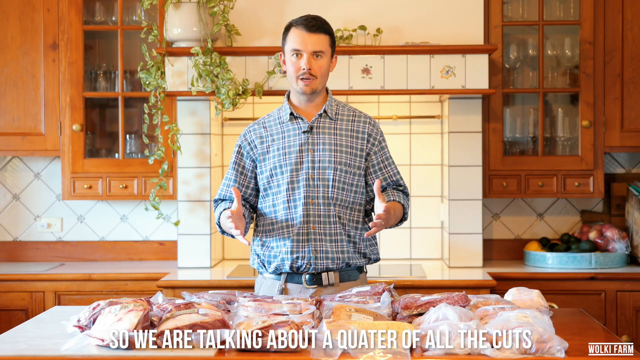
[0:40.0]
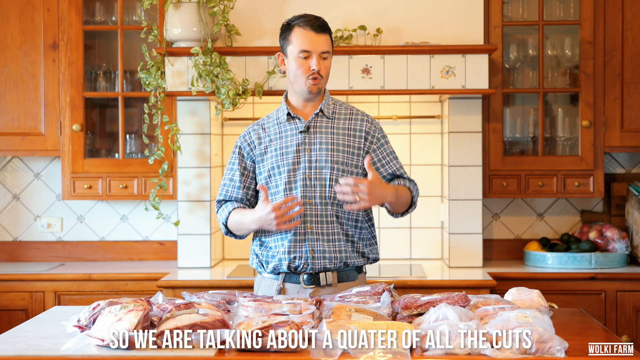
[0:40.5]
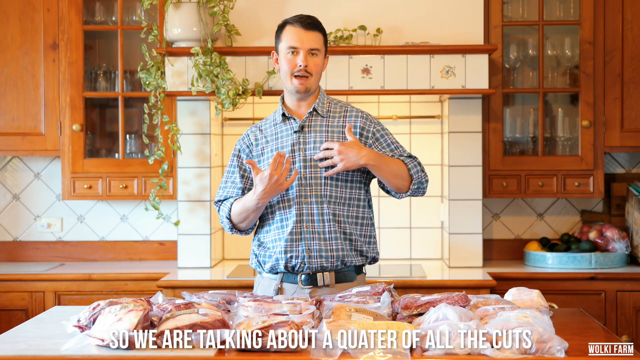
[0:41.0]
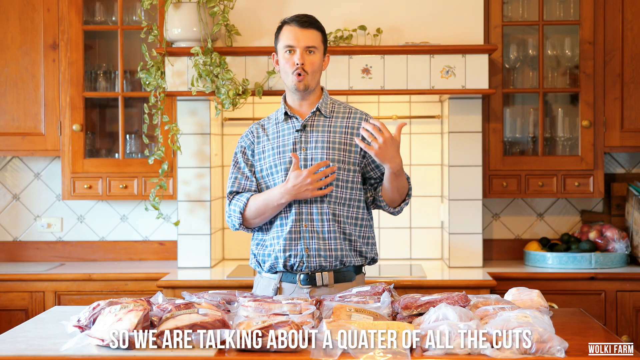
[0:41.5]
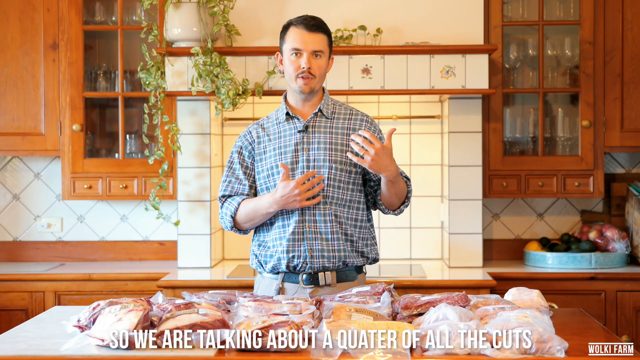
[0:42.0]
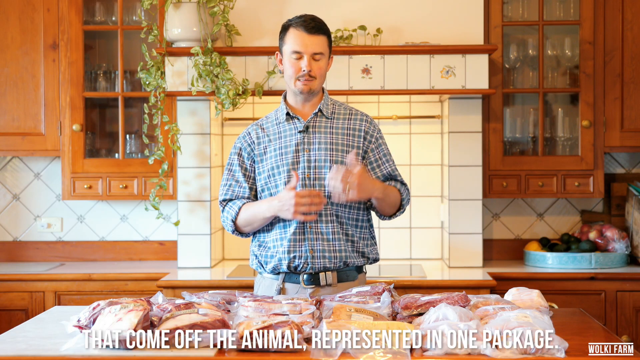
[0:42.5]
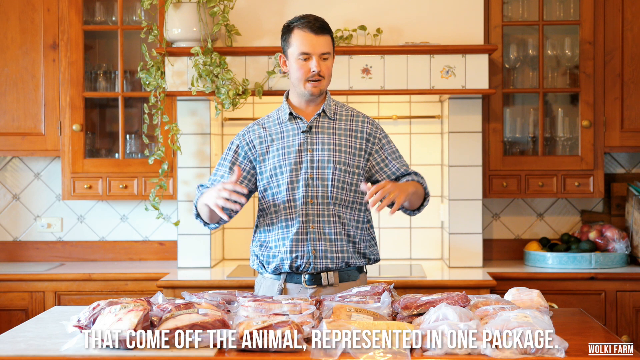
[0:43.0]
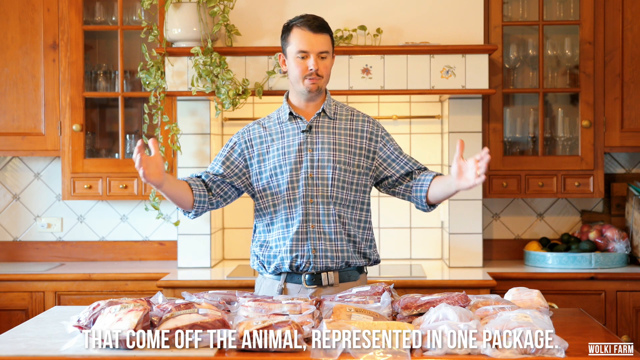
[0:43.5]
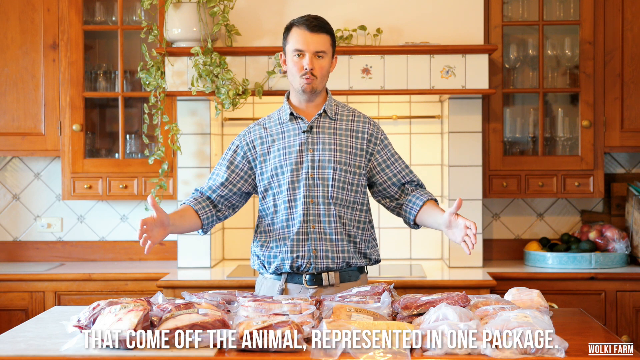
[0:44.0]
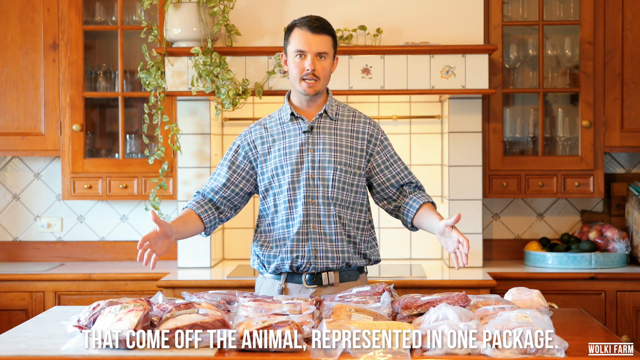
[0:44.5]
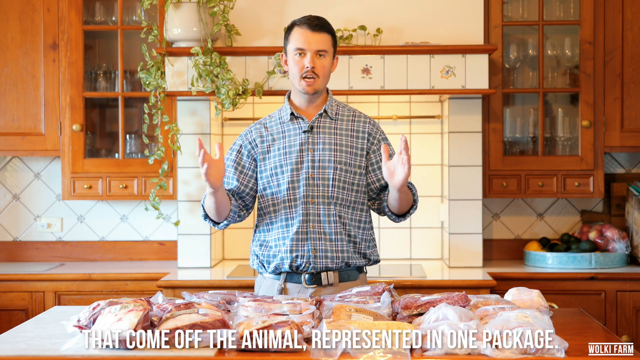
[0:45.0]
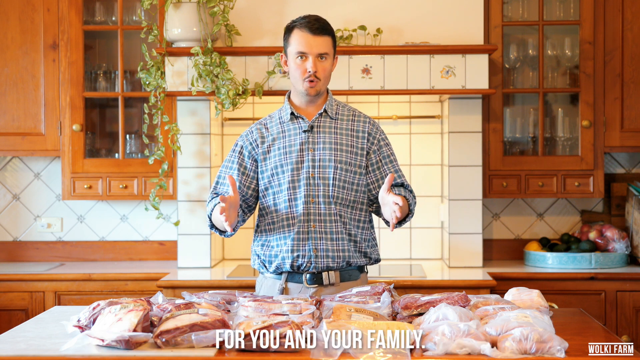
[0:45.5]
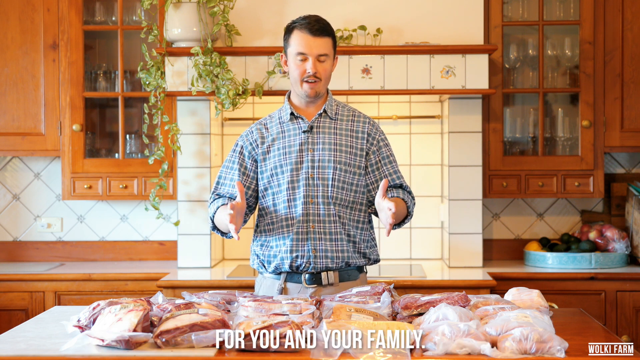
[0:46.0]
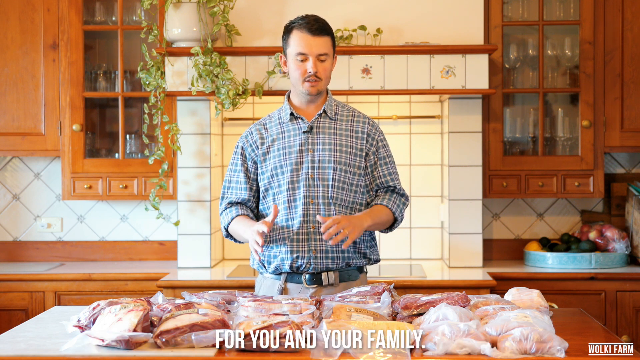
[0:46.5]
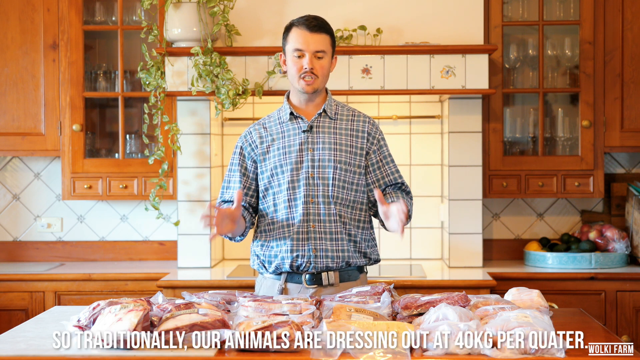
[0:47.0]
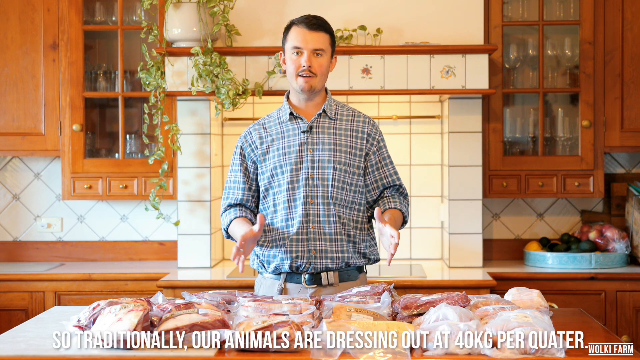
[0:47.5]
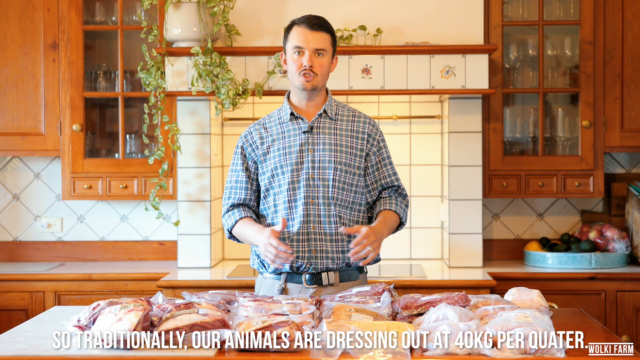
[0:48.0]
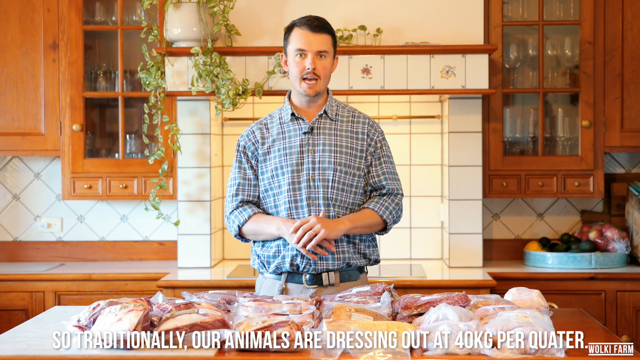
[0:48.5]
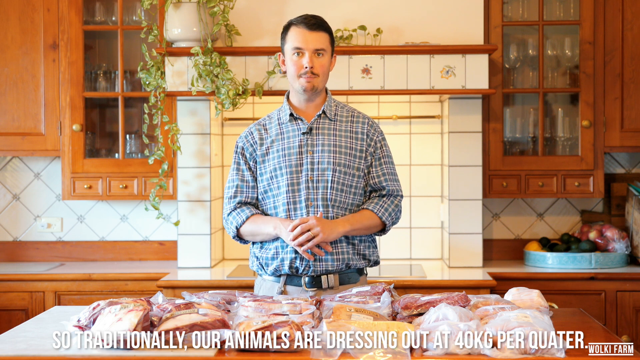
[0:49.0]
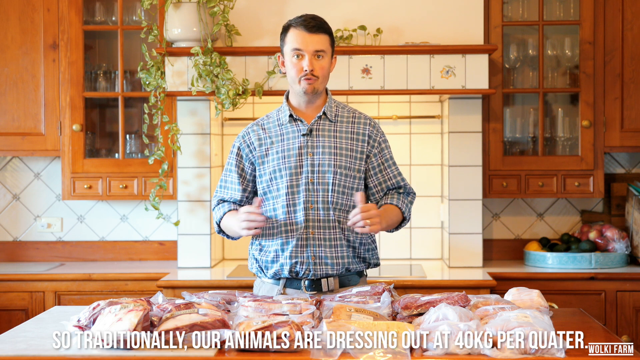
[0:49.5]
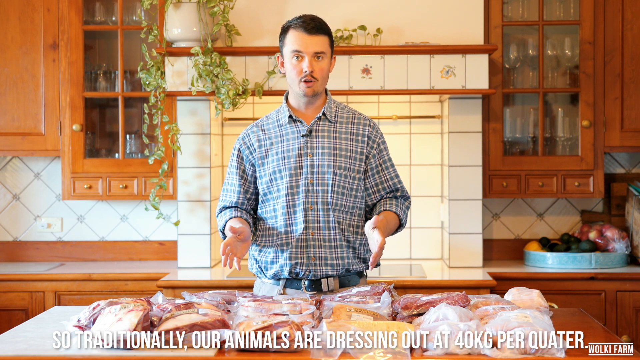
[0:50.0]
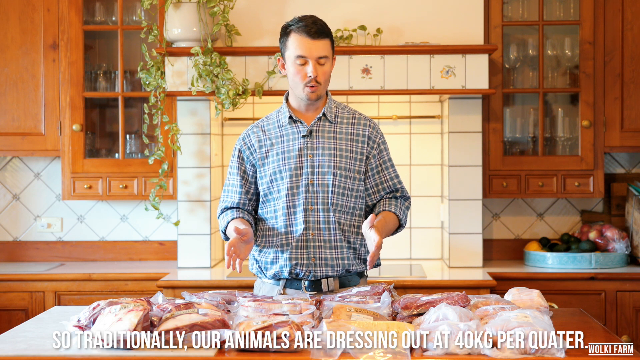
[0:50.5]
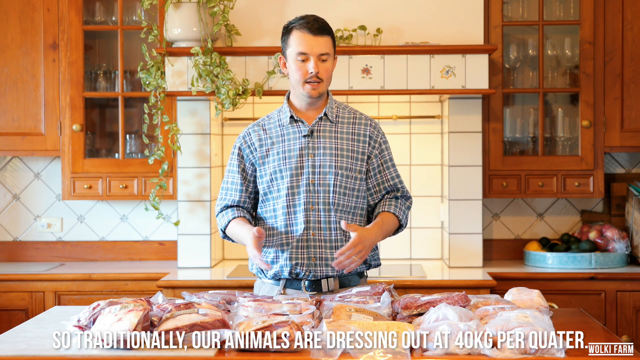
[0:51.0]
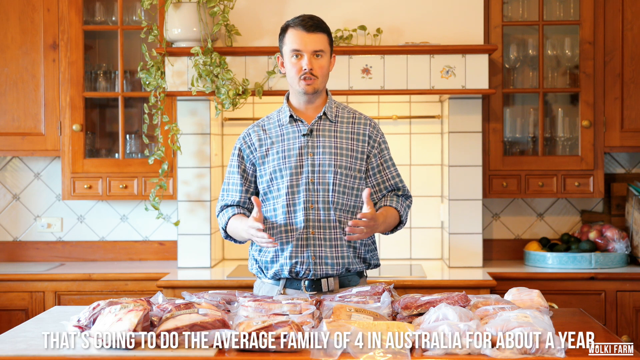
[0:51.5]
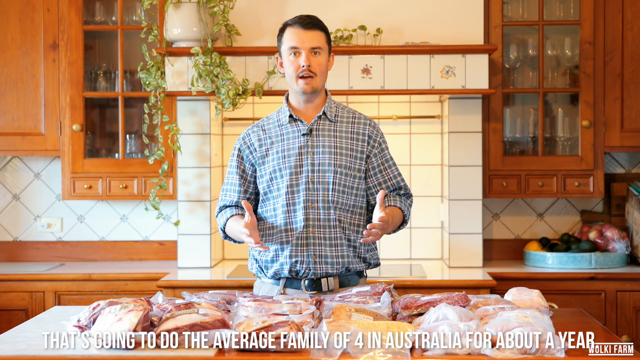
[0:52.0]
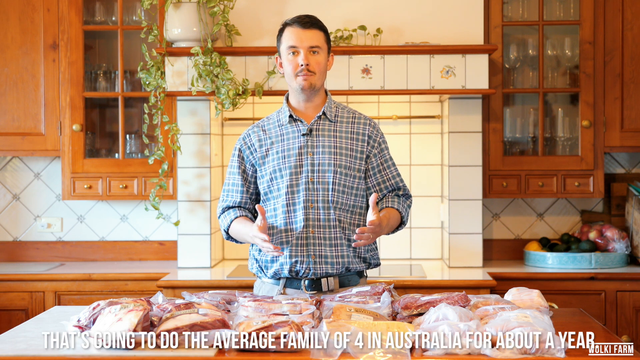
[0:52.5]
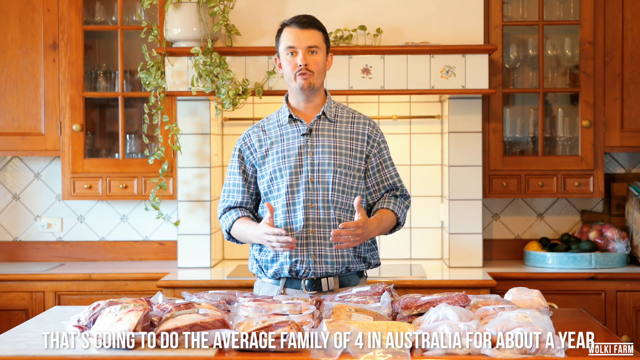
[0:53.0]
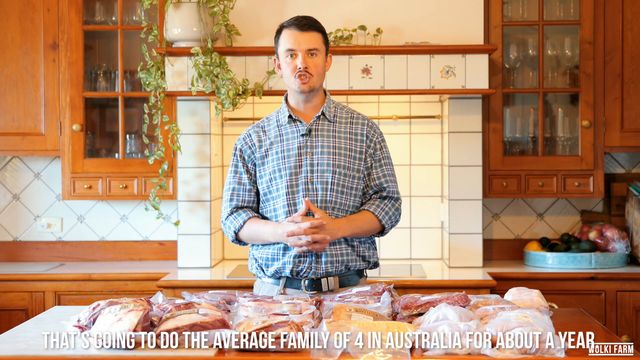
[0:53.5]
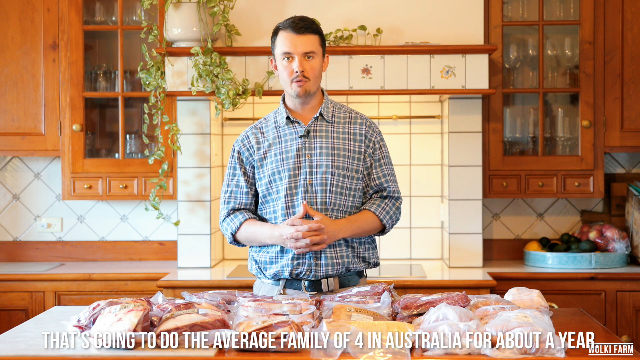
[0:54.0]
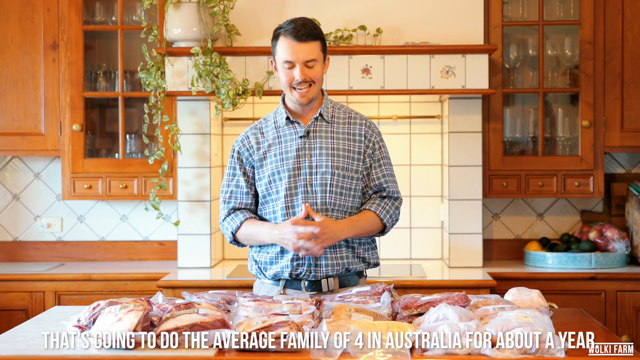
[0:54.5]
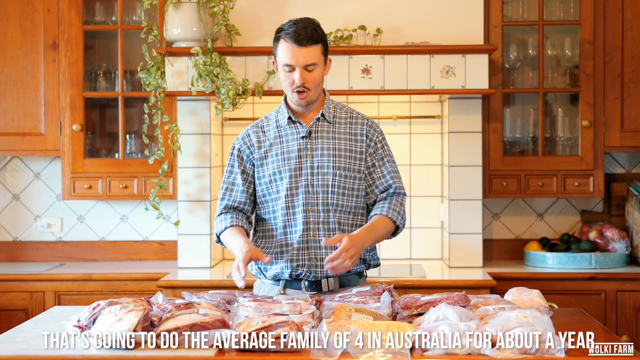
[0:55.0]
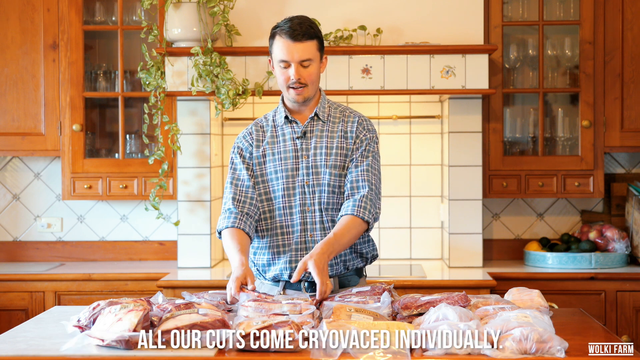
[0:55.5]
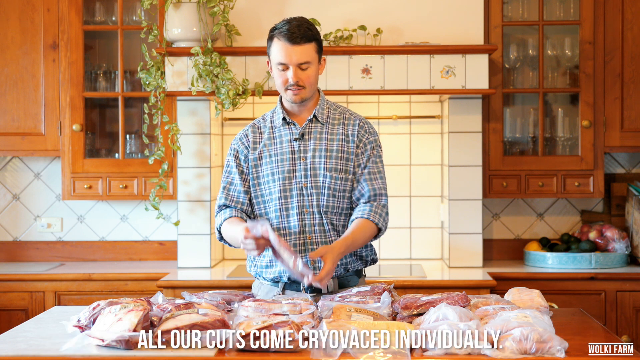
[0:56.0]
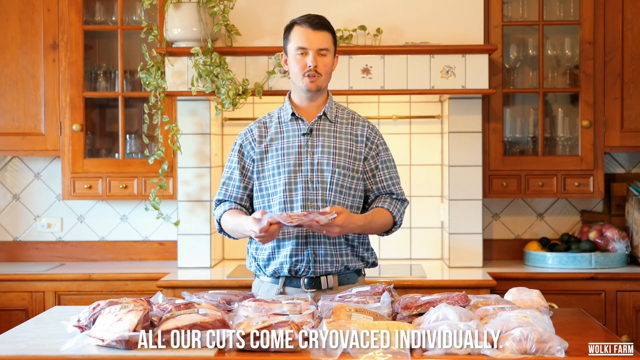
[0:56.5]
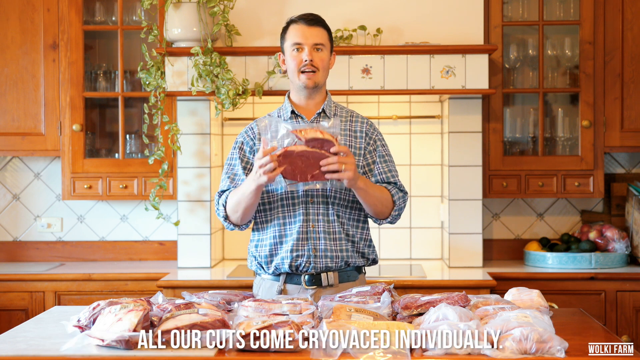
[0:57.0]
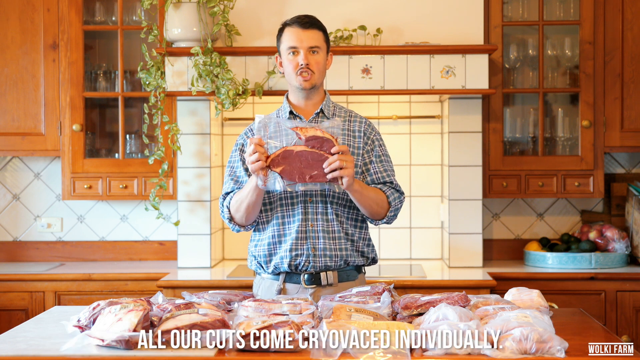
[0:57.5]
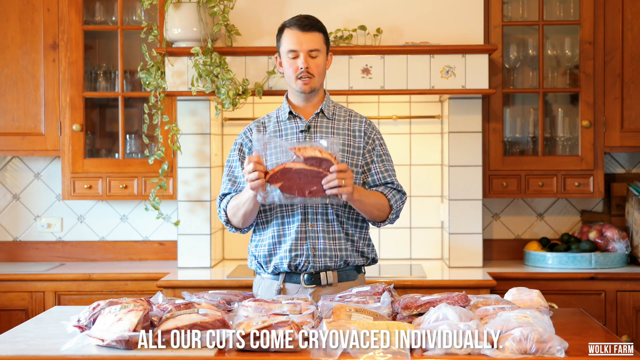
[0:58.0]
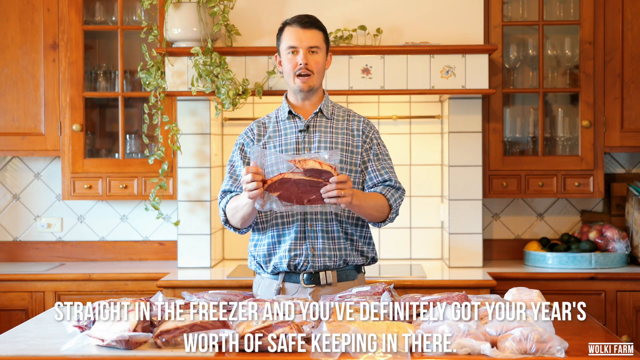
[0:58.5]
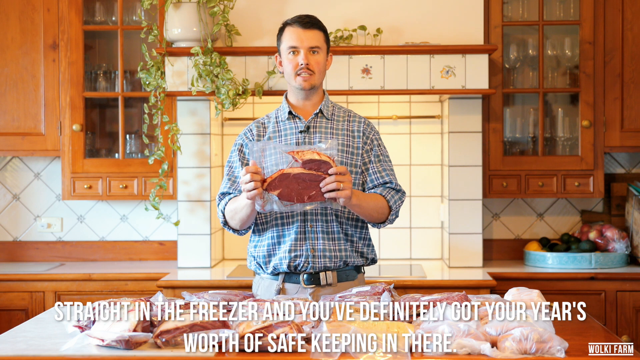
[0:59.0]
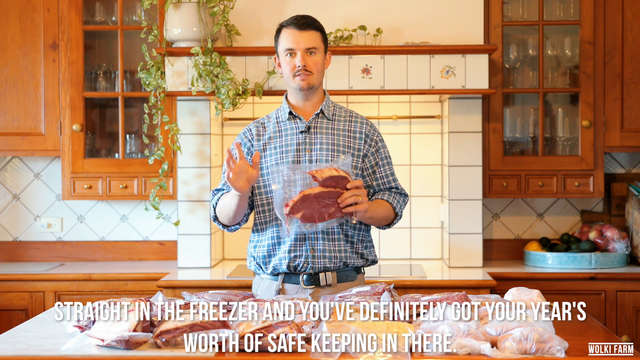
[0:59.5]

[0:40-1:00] The caption continues about the beef split, and all the beef is shown from above, each piece in a clear bag. He says it is a quarter of all the cuts that come off the animal represented in one package for you and your family, that their animals traditionally dress out at 40 kg per quarter, which will do the average family of four in Australia for about a year, and that the cuts go straight in the freezer with a year's worth of safekeeping. The cuts are apparently vacuum sealed in plastic packaging. The white captions are hard to read against the meat in the clear bags behind them.